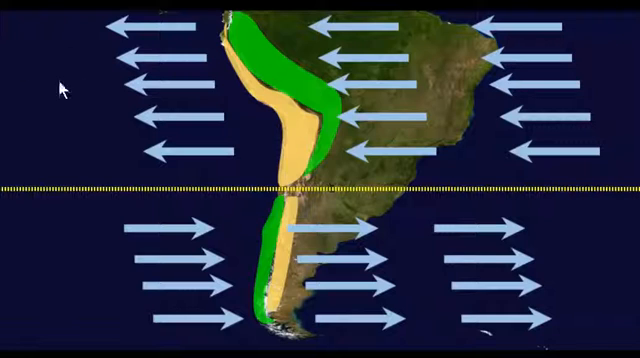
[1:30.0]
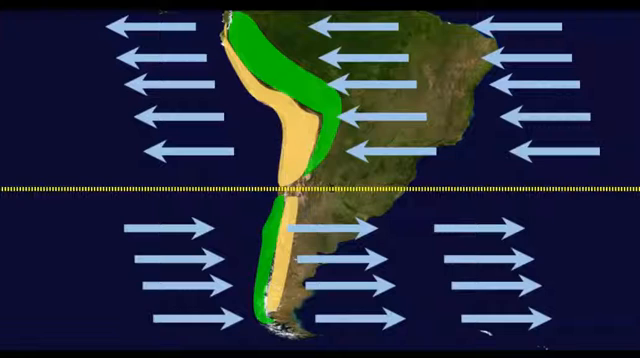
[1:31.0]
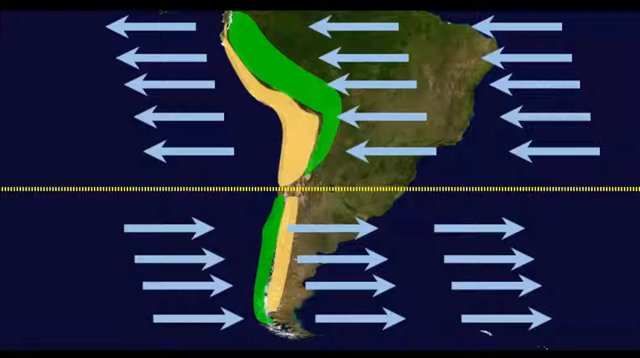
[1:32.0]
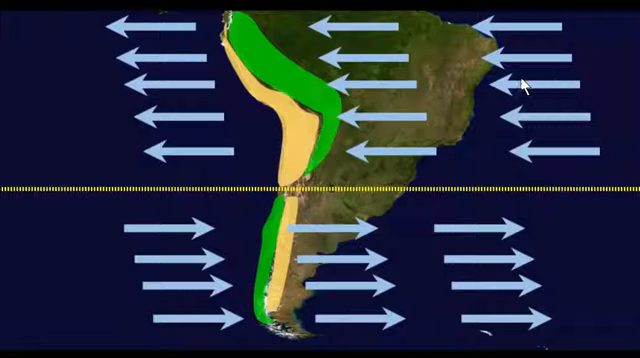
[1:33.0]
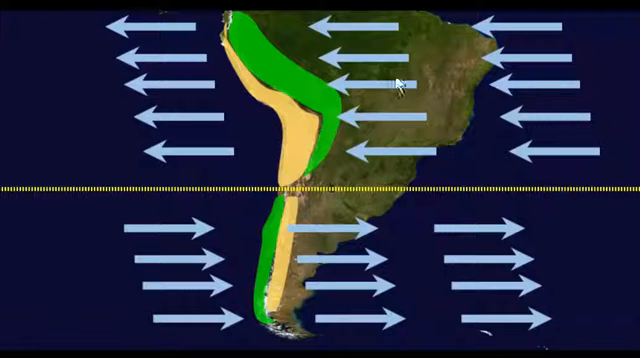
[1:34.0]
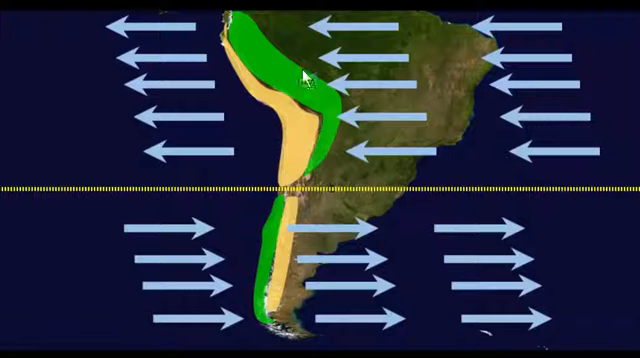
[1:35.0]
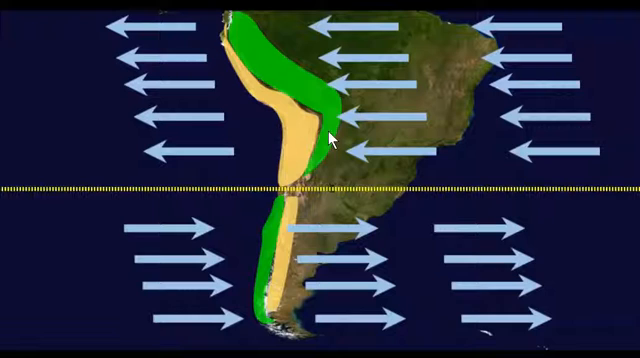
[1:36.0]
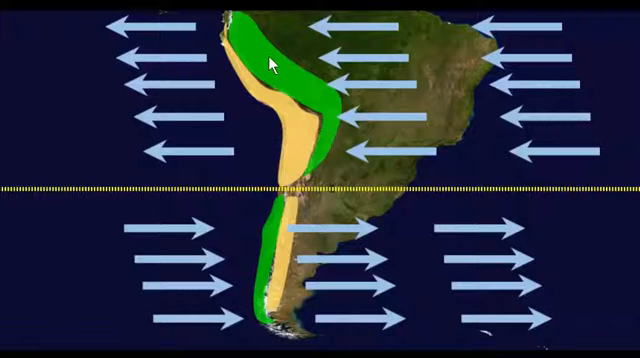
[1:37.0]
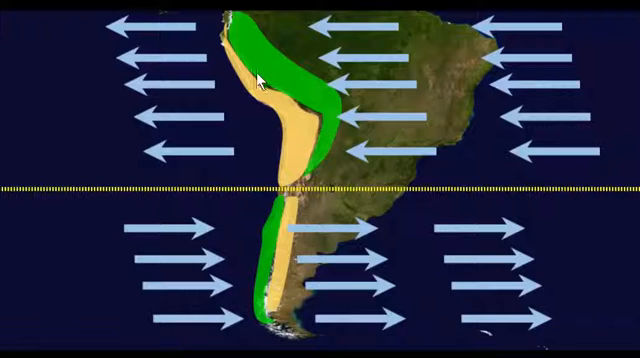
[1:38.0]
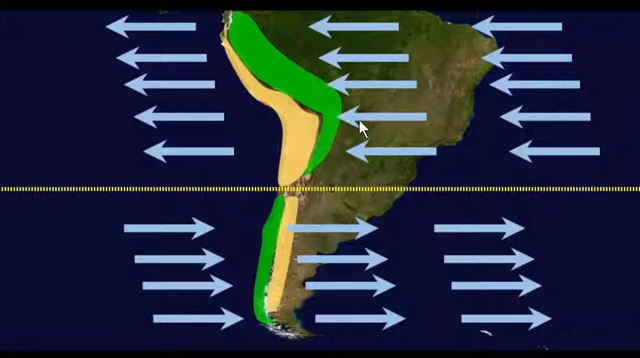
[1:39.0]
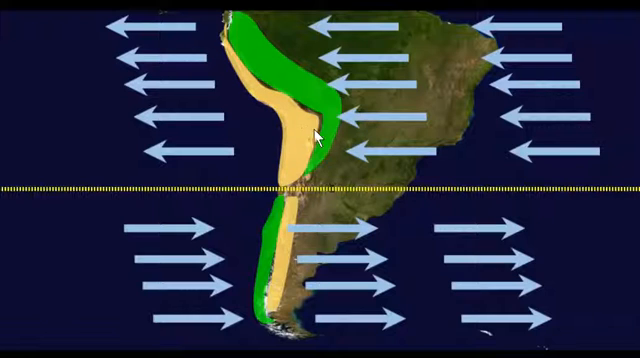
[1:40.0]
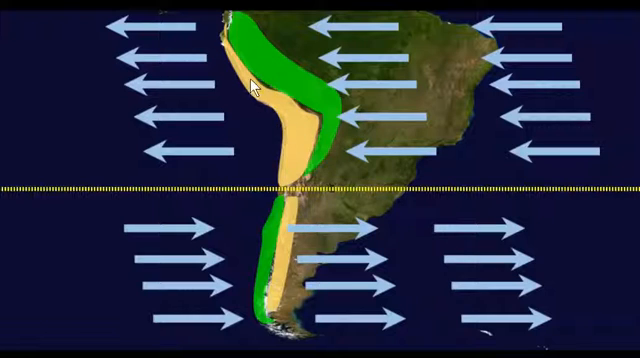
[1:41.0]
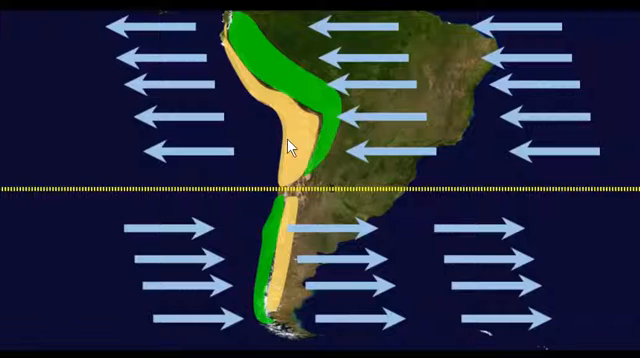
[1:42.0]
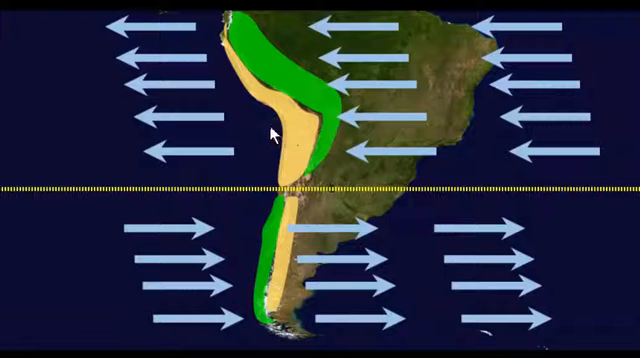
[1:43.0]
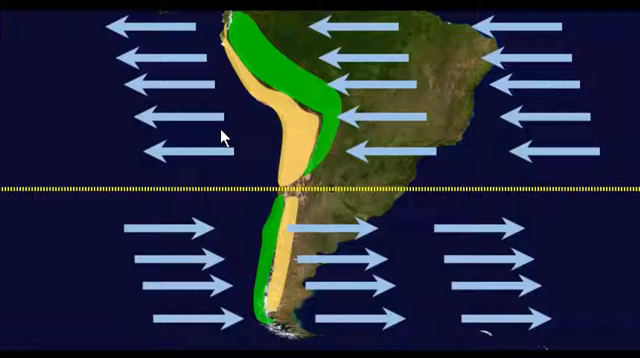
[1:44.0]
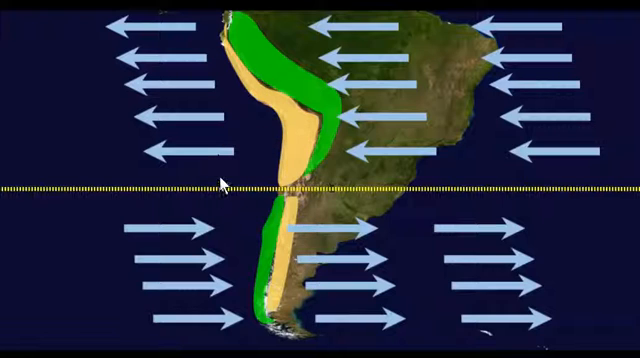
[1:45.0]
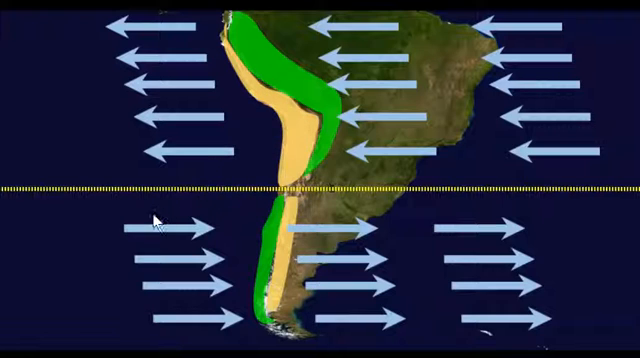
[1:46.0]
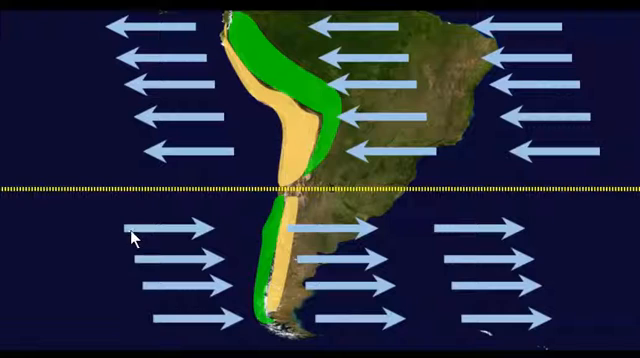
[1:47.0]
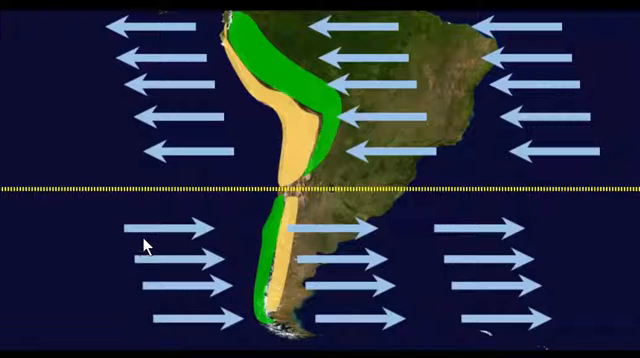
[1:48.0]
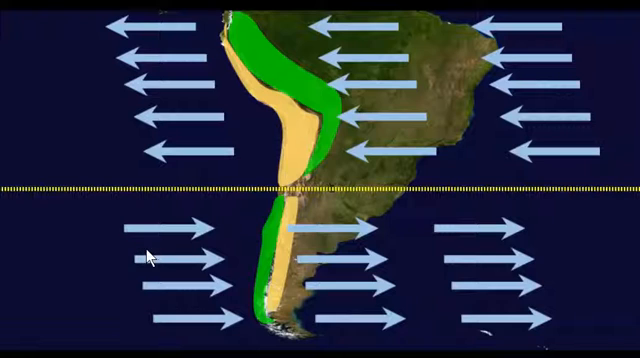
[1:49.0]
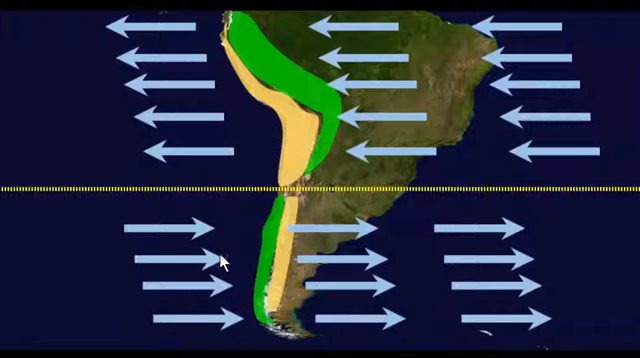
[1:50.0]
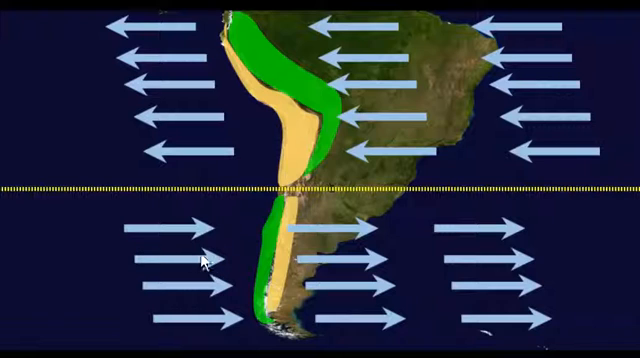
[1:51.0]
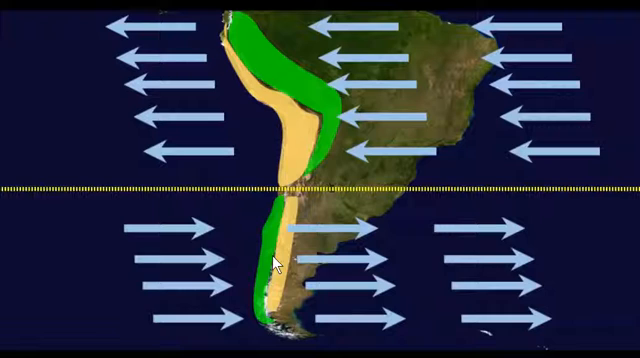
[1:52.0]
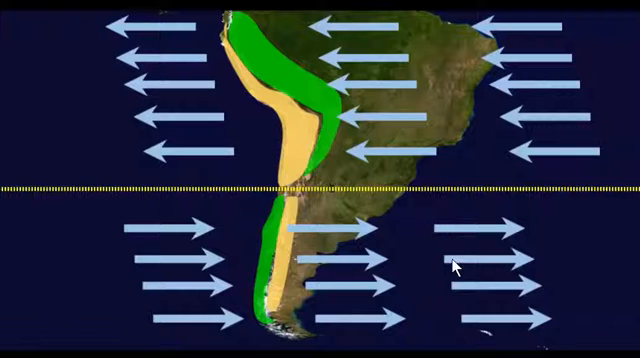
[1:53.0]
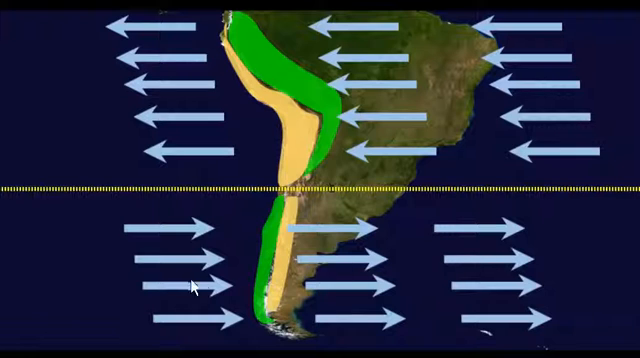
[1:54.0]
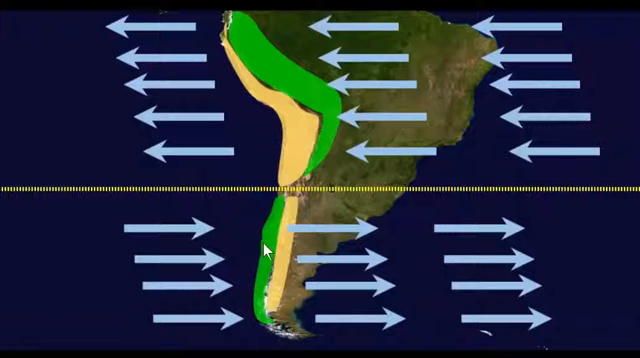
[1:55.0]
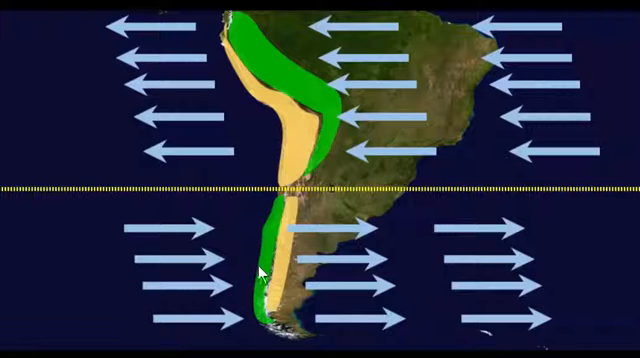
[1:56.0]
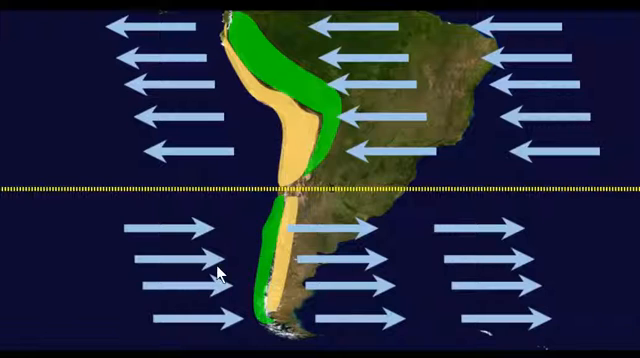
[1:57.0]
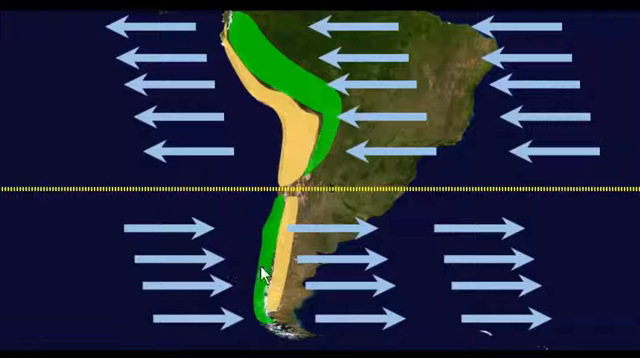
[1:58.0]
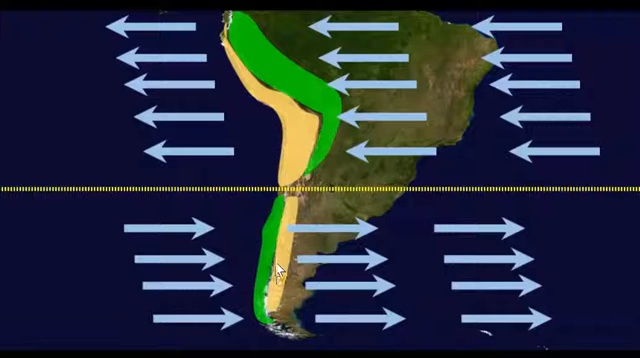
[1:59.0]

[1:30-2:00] The graphical map illustration is displayed against a dark background, with a horizontal dotted line running across the screen and splitting it into two parts. Above the yellow line are three batches of five pale blue arrows each, pointing left; below it are three batches of five pale blue arrows each, pointing right. A mouse pointer hovers above the yellow dotted line over a green marking on the left side of the landmass, then over a yellow marking beside the green marking. The pointer then goes below the yellow dotted line and hovers over the arrows there, and also over the green and yellow markings below the line.